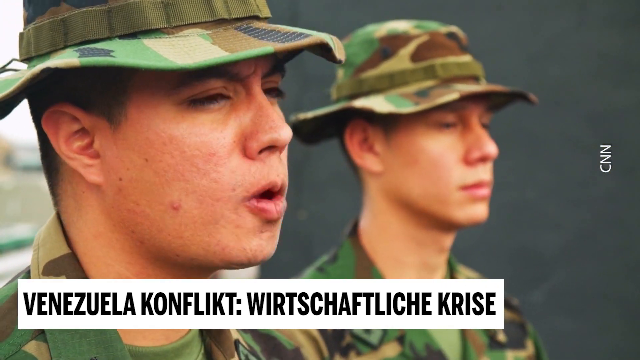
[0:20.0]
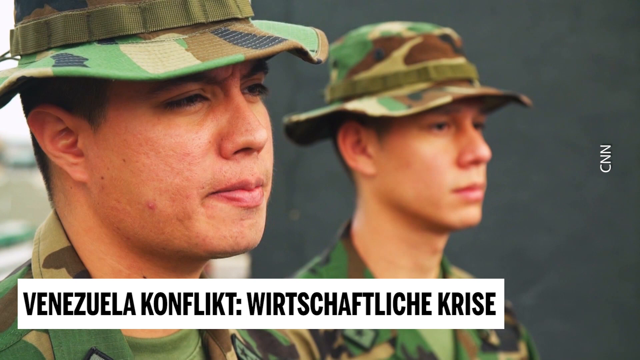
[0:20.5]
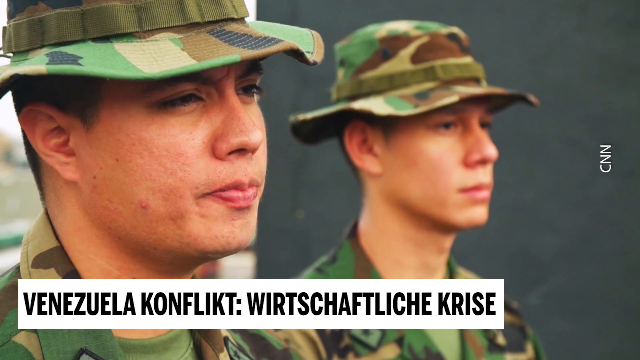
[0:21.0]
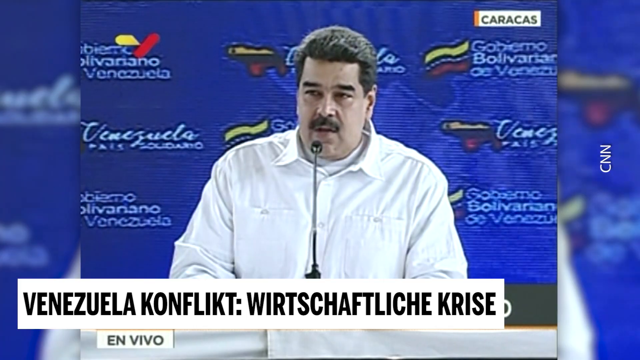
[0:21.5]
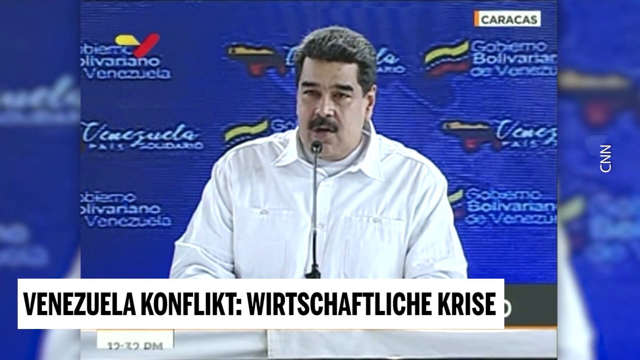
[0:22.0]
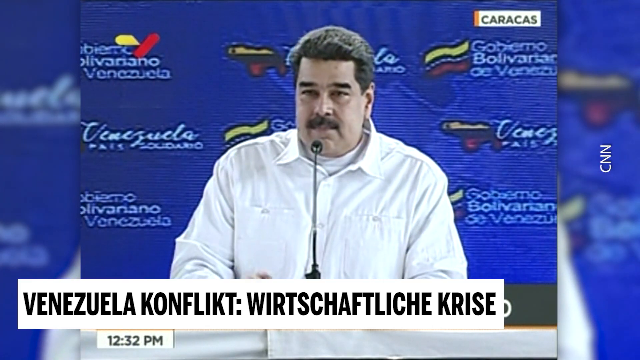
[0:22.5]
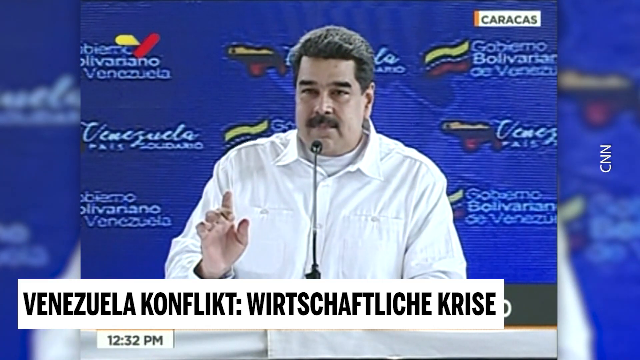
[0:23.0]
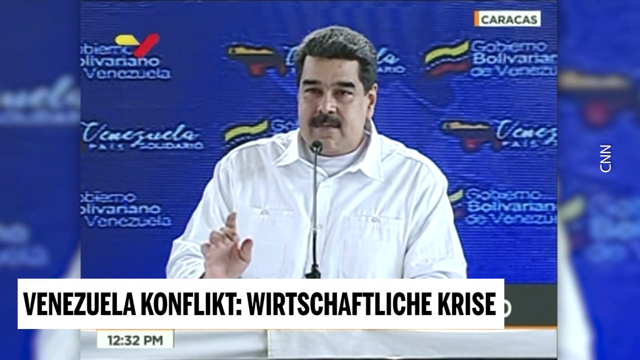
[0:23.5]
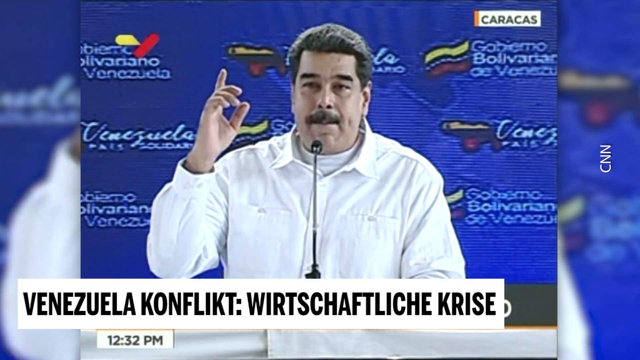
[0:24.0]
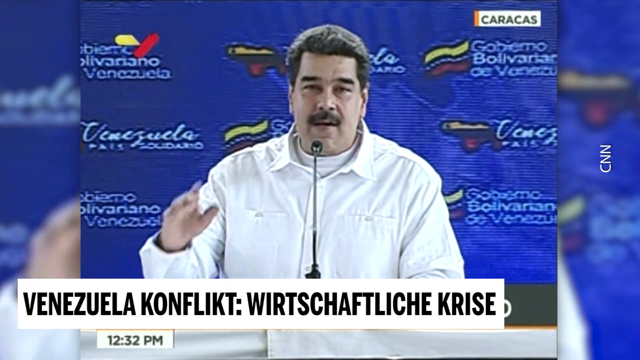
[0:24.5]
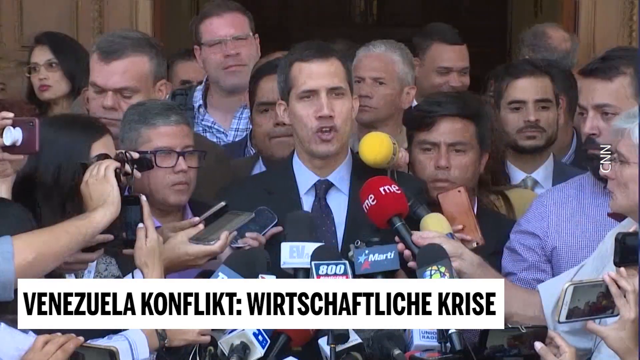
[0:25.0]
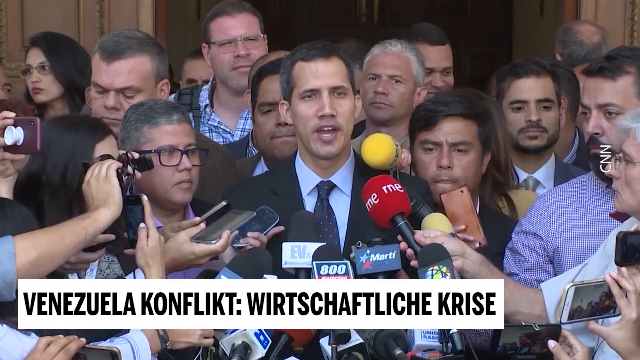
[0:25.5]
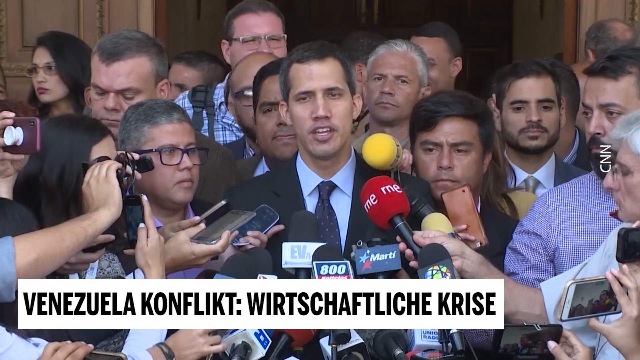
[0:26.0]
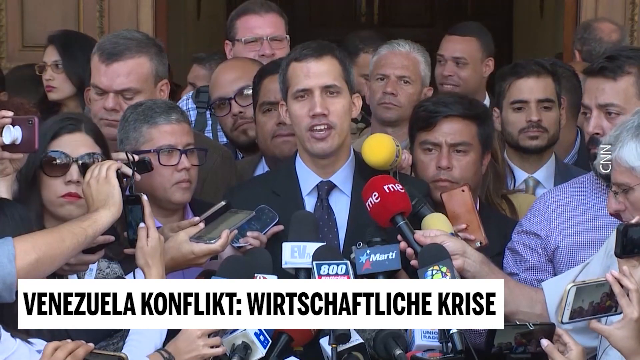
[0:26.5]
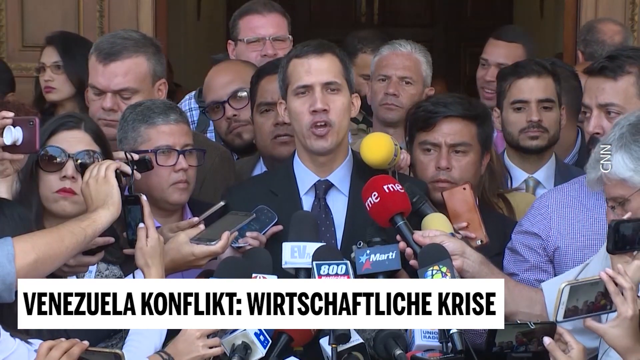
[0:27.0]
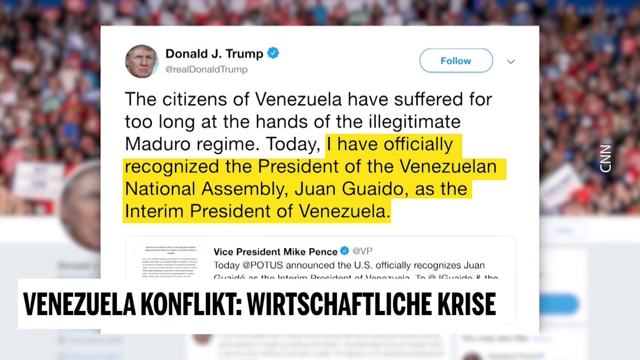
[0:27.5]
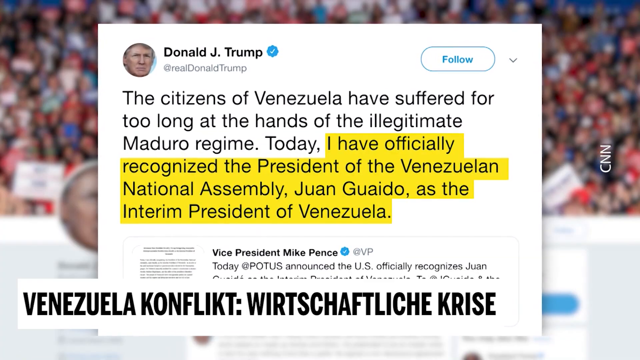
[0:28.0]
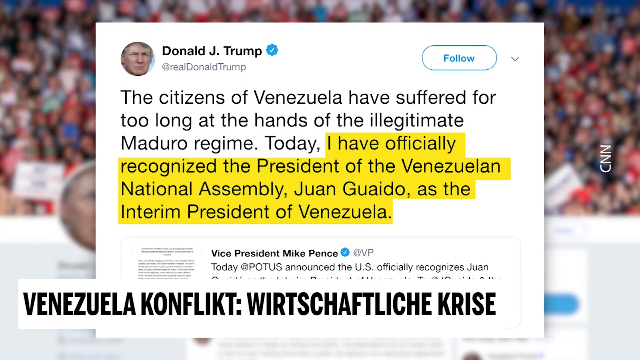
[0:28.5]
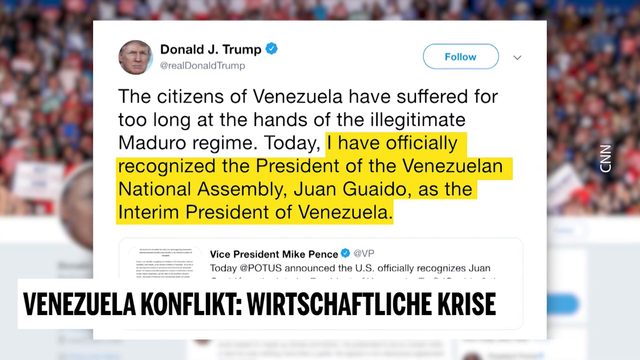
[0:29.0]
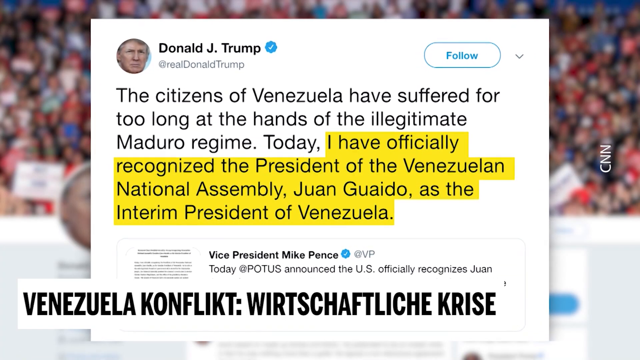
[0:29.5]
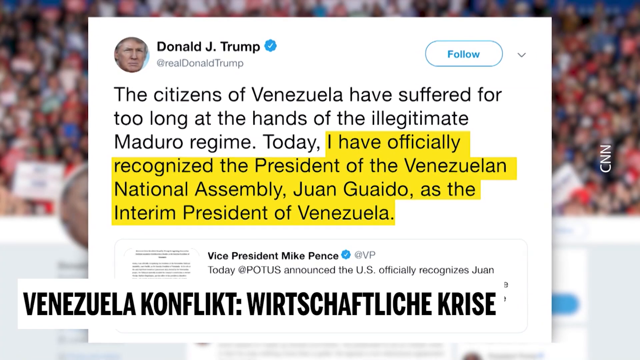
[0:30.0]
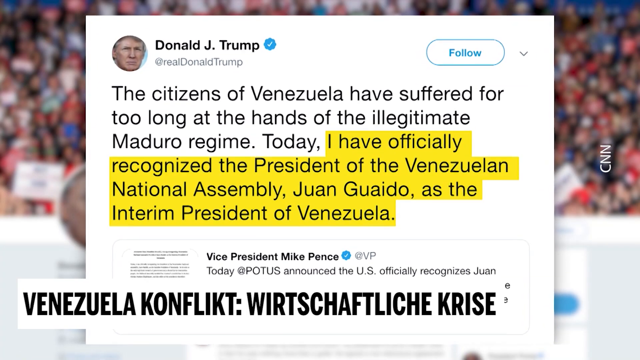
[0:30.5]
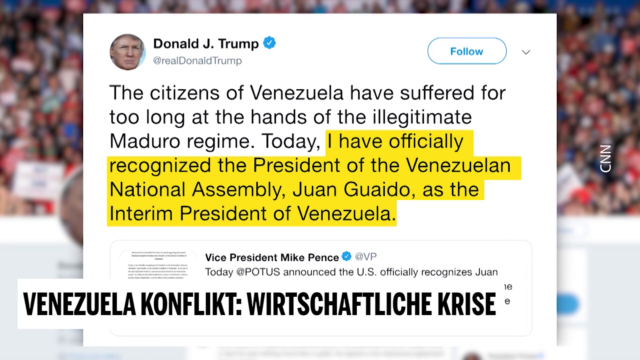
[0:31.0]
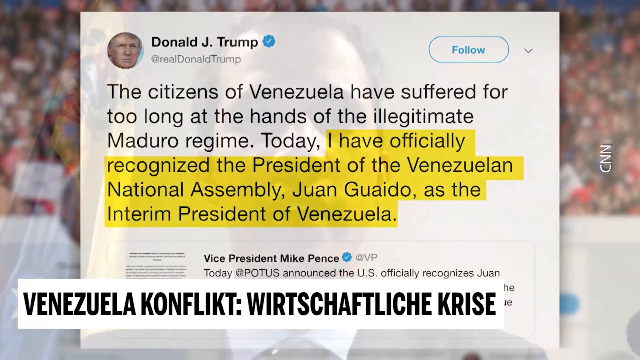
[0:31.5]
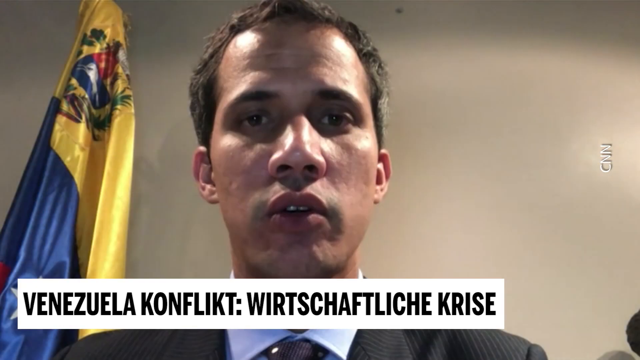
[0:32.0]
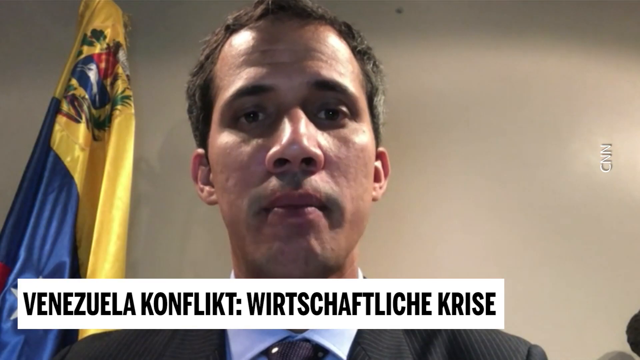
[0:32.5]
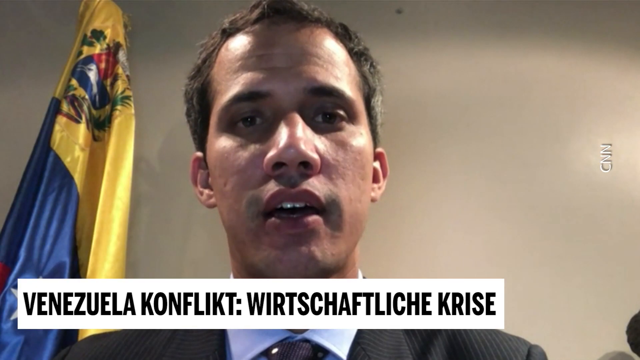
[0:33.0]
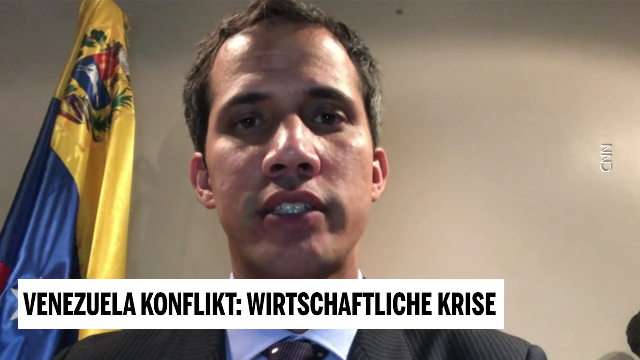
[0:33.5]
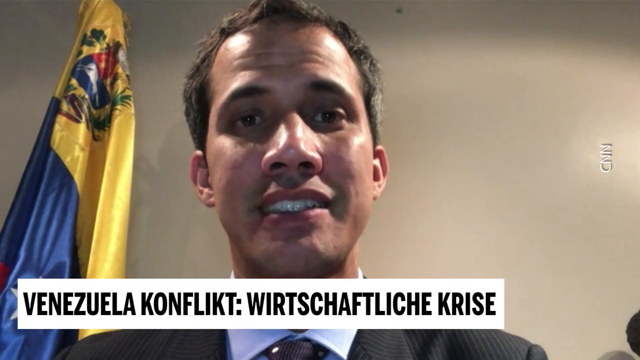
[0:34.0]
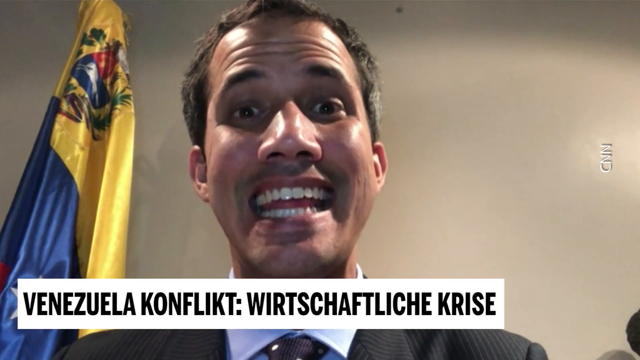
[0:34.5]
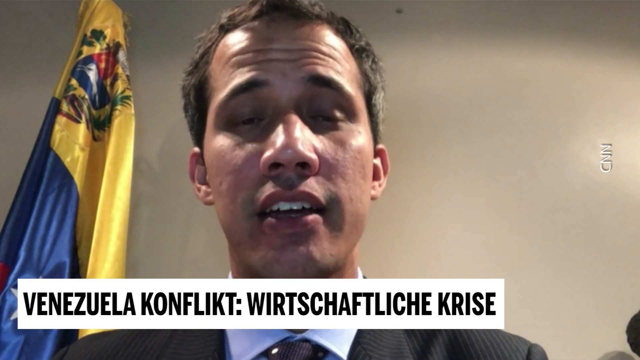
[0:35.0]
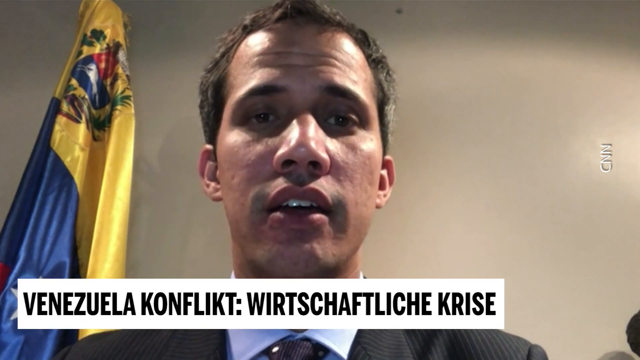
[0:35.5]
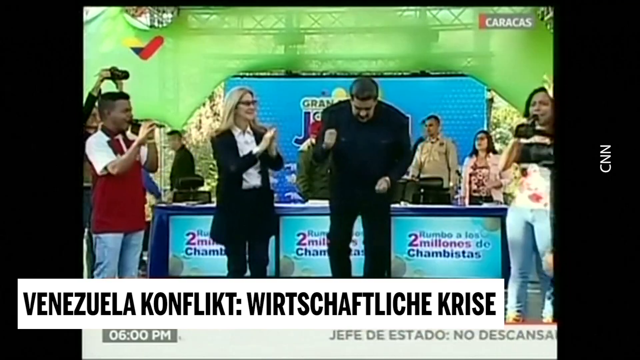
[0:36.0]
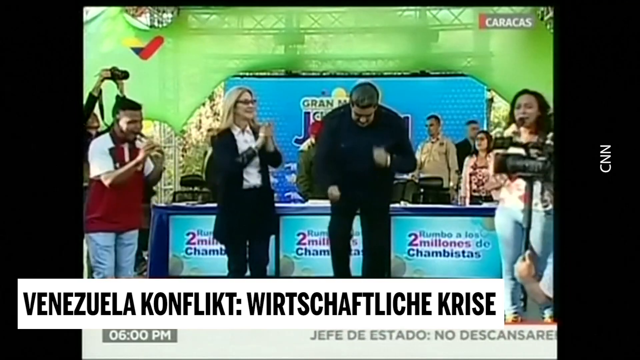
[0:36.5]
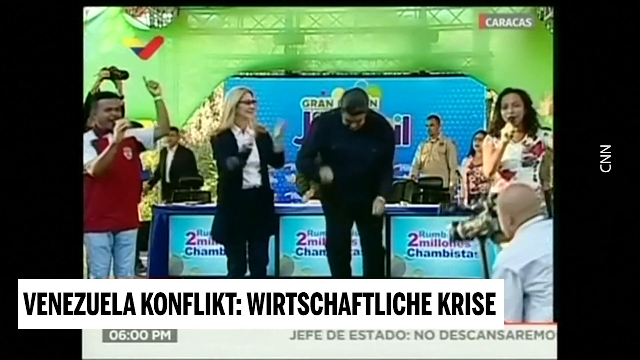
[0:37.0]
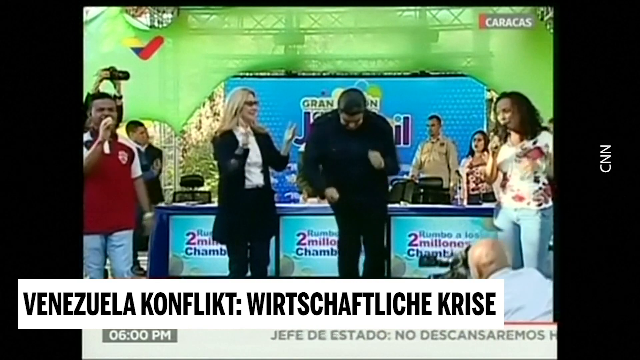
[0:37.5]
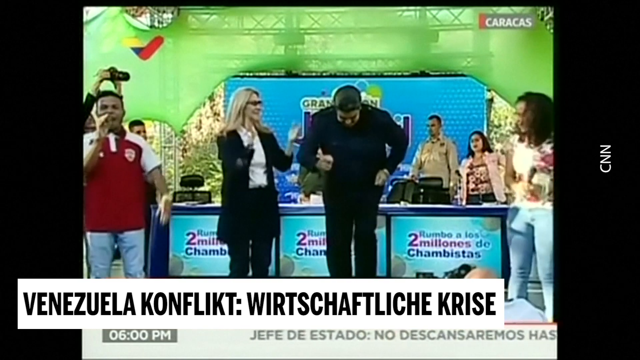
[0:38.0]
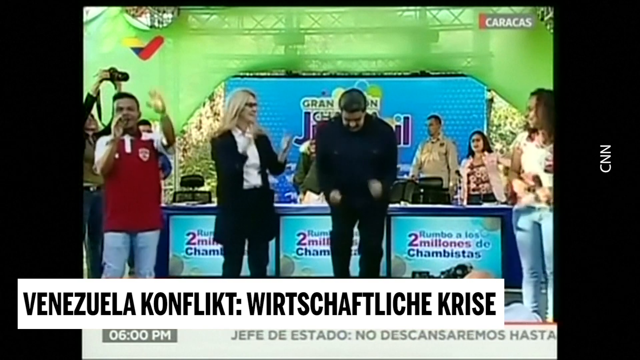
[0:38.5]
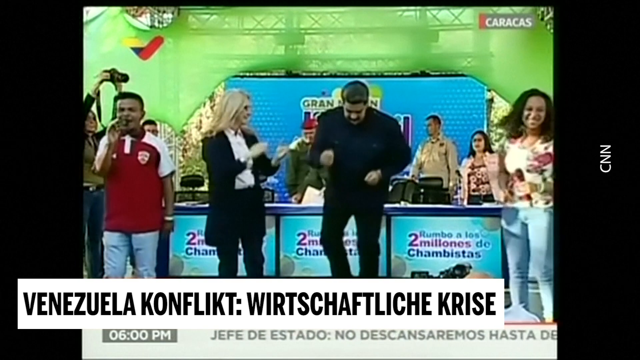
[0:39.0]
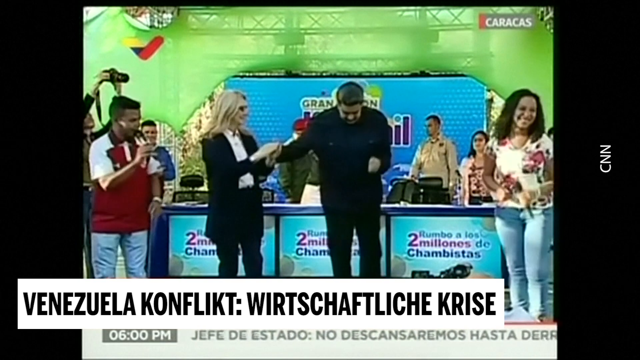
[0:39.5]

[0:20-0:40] A man wearing a shirt and a big belt, with gray hair and a moustache, appears. The crowd is shown listening, and a man among them is being interviewed with different microphones pointed at him; he has short hair and wears a blue suit. Next comes a tweet from USA President Donald J. Trump reading: "The citizens of Venezuela have suffered for too long at the hands of the illegitimate Maduro regime. Today, I have recognized the President of the Venezuelan National Assembly, Juan Guiado, as the Interim President of Venezuela." The video then shows a man being interviewed, the same man who was speaking at the crowd. Next, what appears to be President Maduro dances before a blue background with "2 million" written on it, while people are happy and clapping their hands.